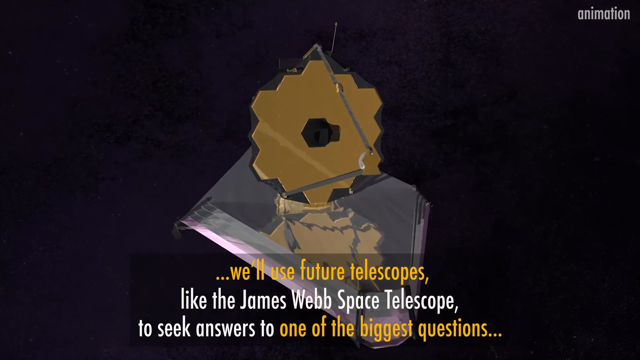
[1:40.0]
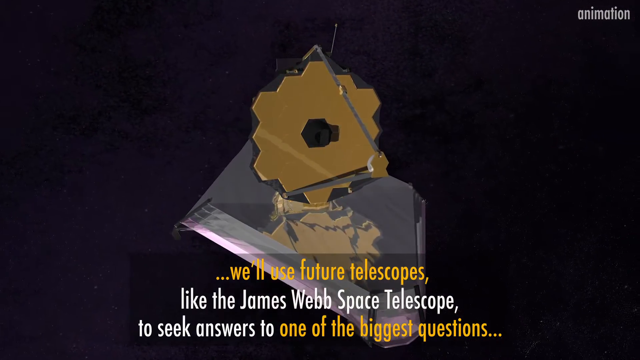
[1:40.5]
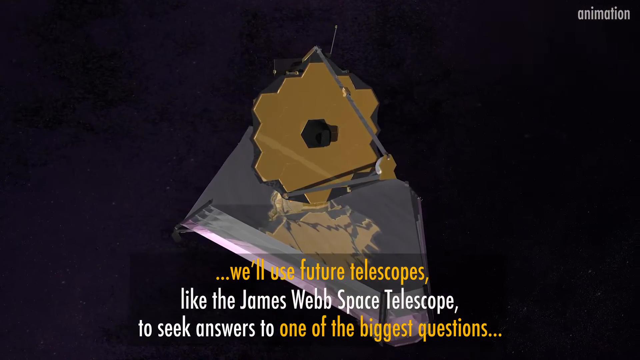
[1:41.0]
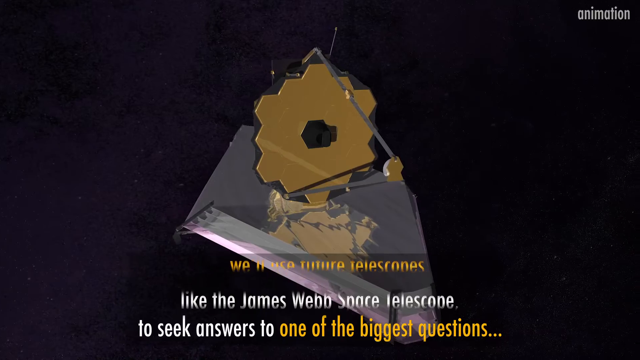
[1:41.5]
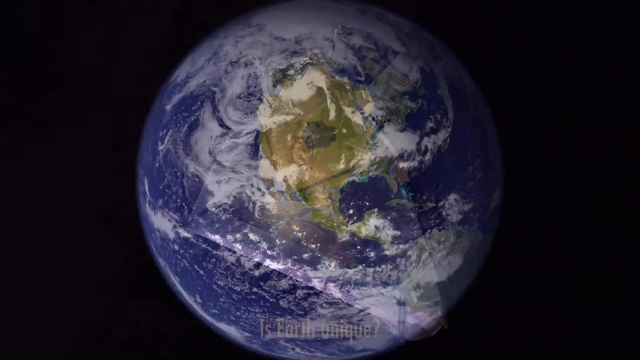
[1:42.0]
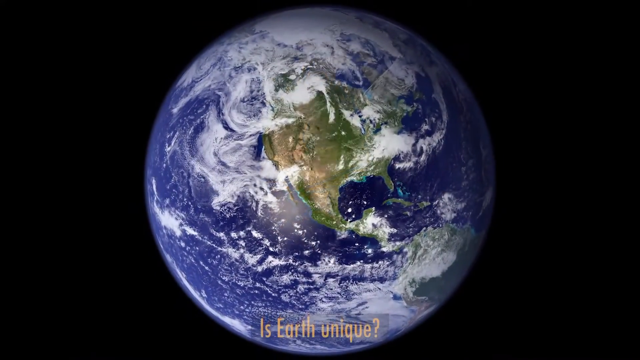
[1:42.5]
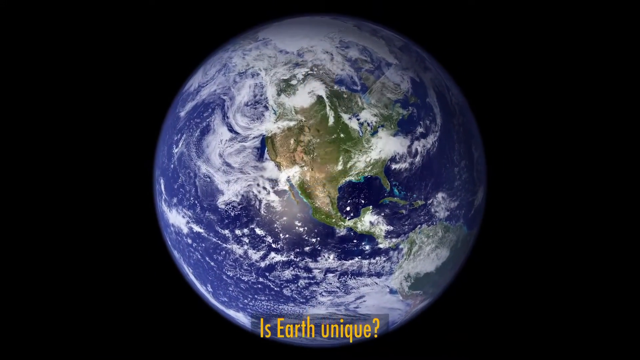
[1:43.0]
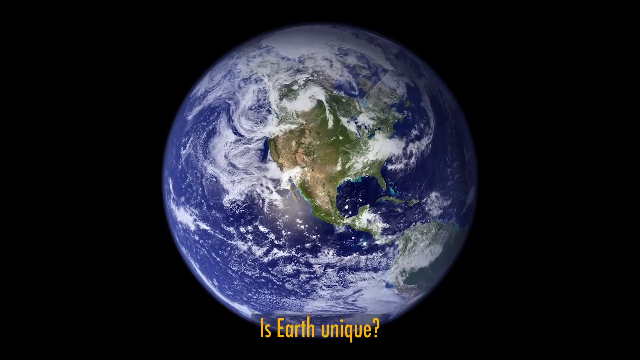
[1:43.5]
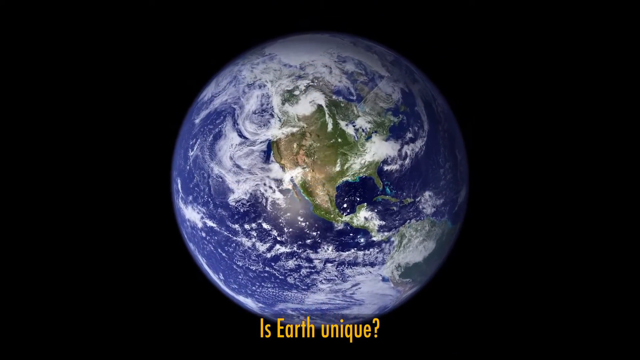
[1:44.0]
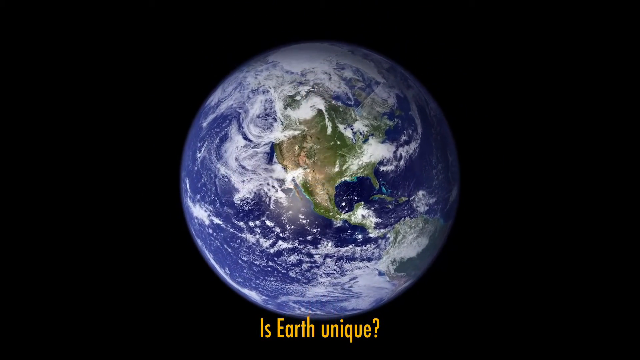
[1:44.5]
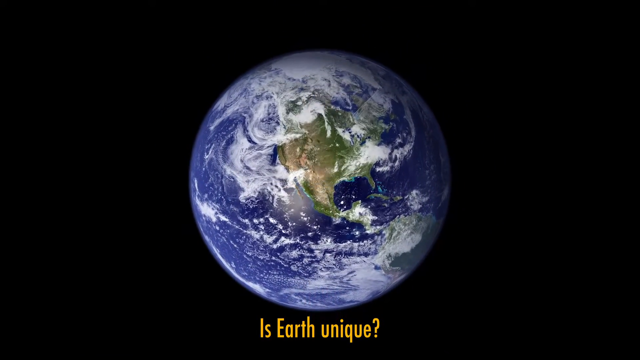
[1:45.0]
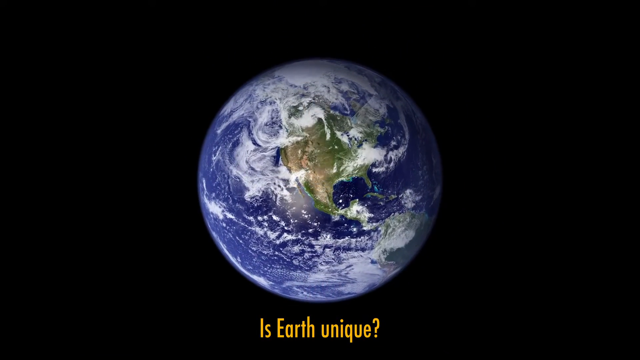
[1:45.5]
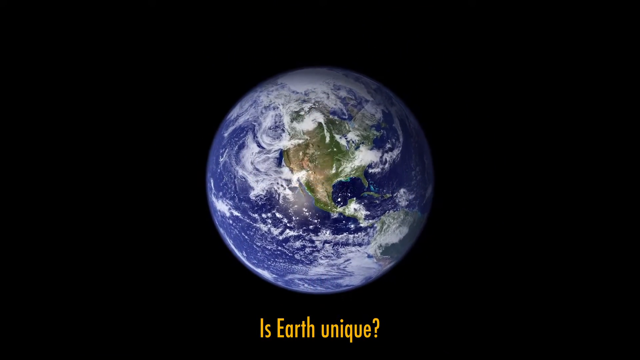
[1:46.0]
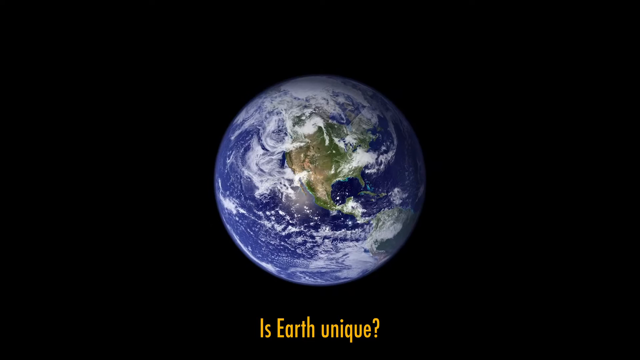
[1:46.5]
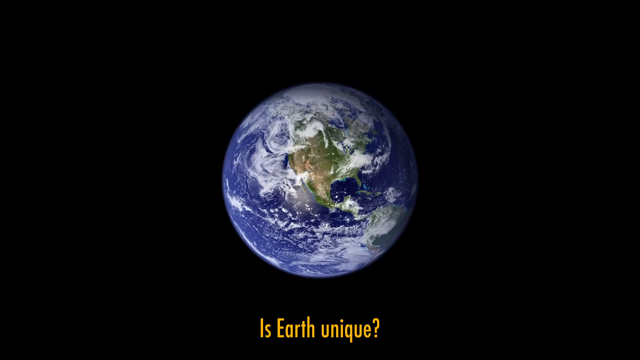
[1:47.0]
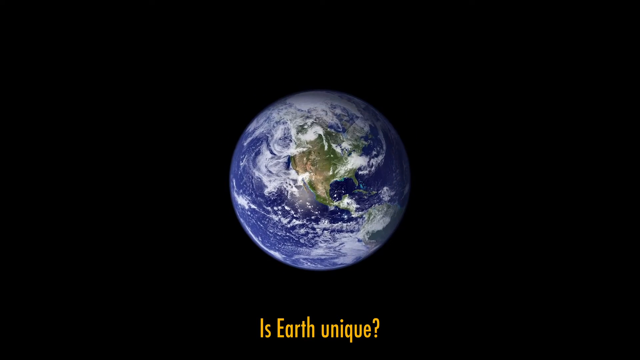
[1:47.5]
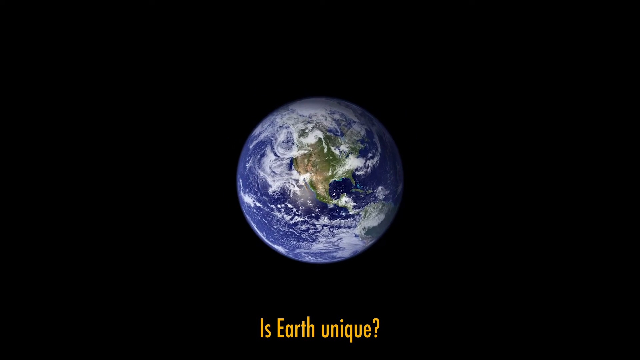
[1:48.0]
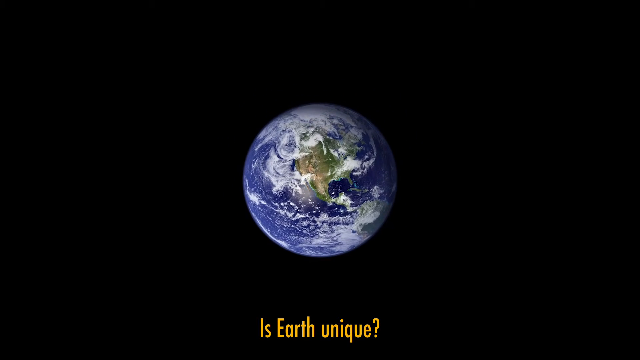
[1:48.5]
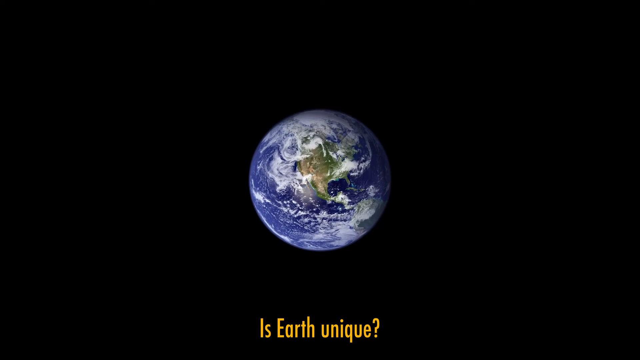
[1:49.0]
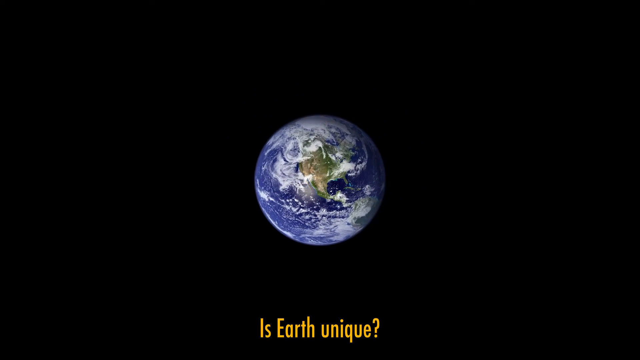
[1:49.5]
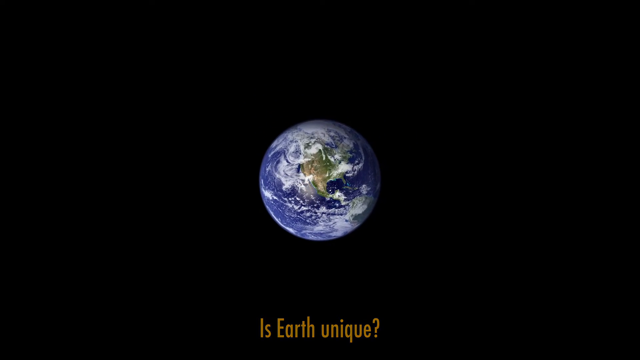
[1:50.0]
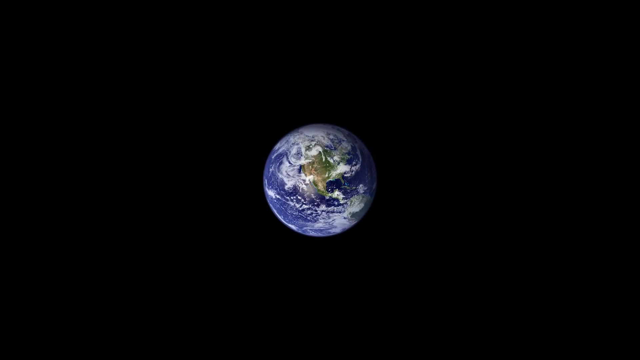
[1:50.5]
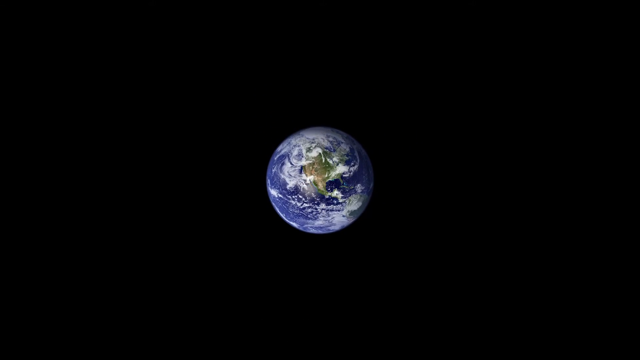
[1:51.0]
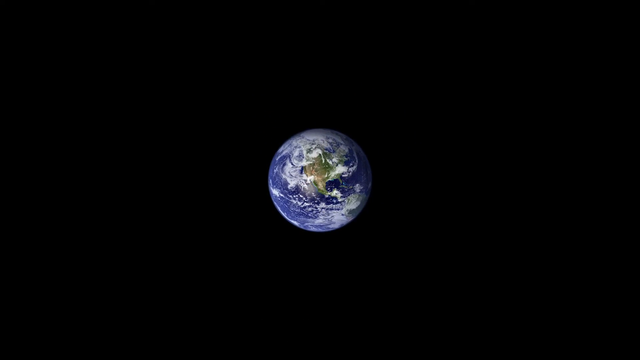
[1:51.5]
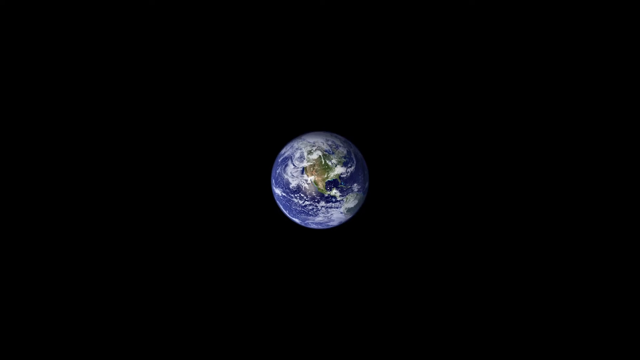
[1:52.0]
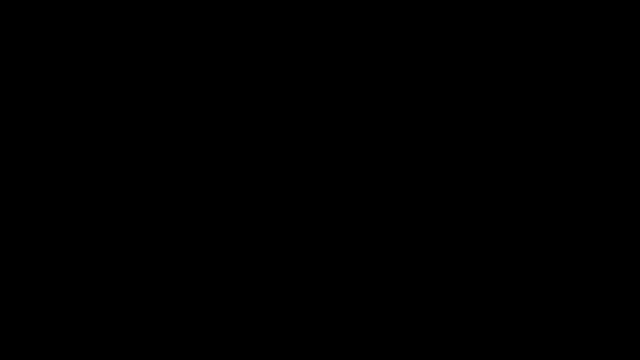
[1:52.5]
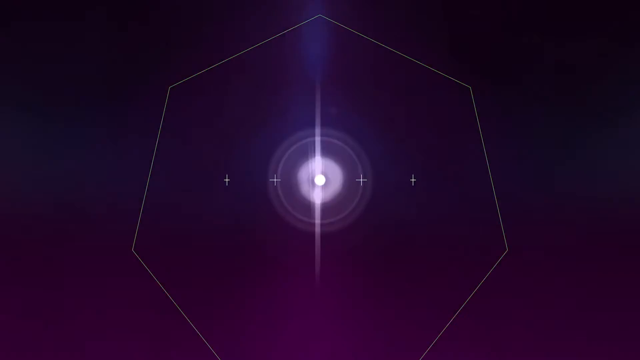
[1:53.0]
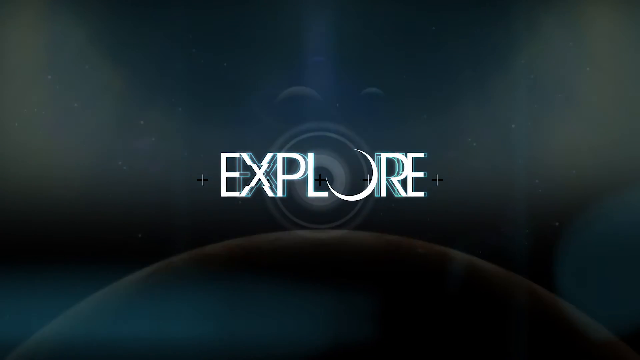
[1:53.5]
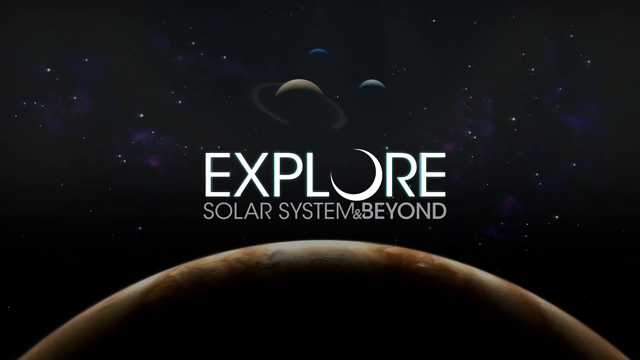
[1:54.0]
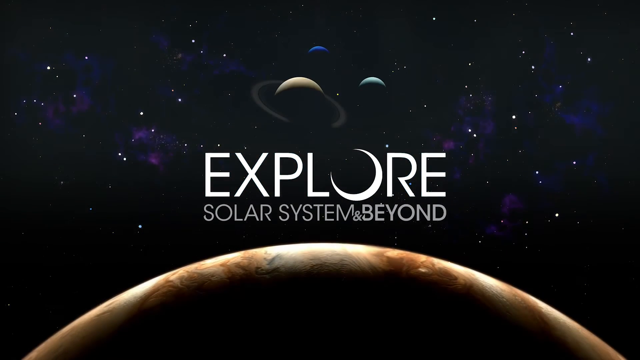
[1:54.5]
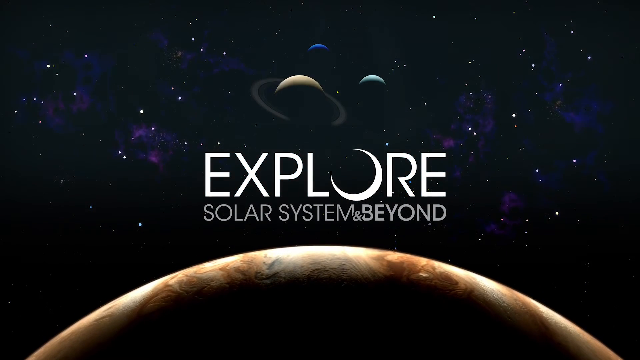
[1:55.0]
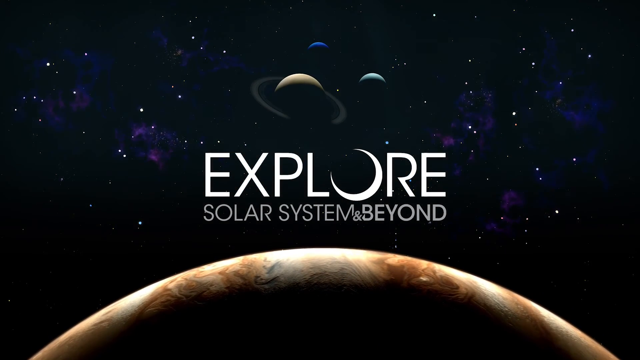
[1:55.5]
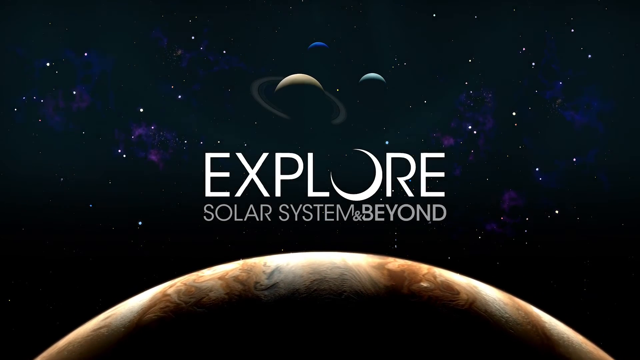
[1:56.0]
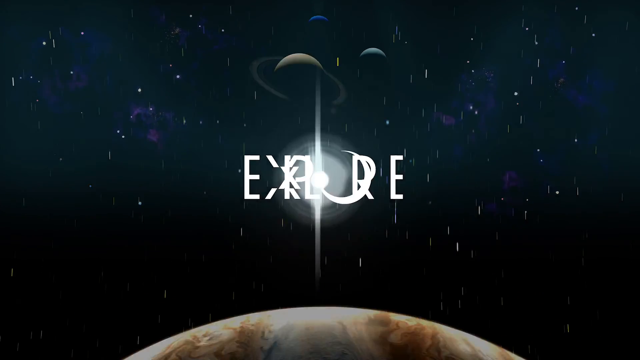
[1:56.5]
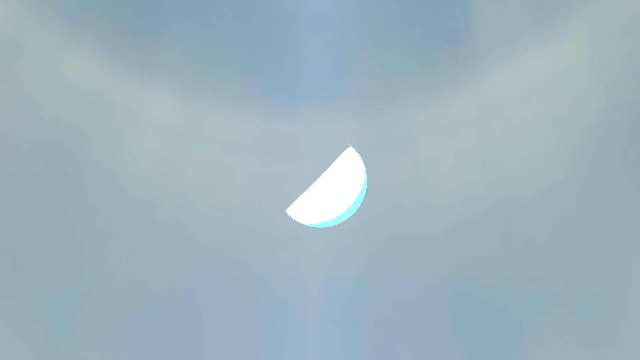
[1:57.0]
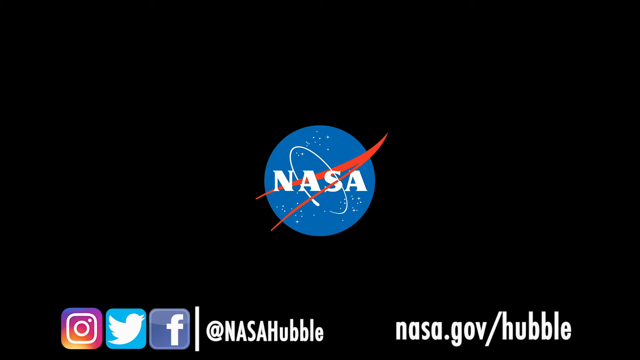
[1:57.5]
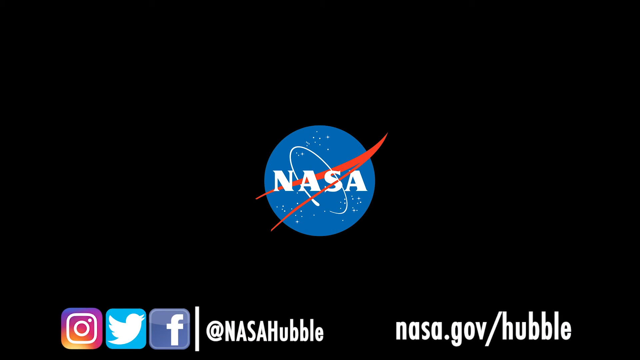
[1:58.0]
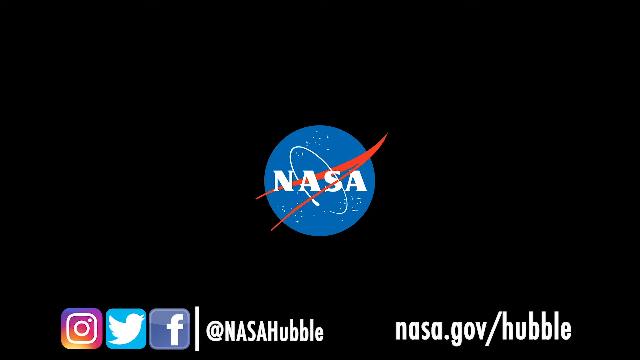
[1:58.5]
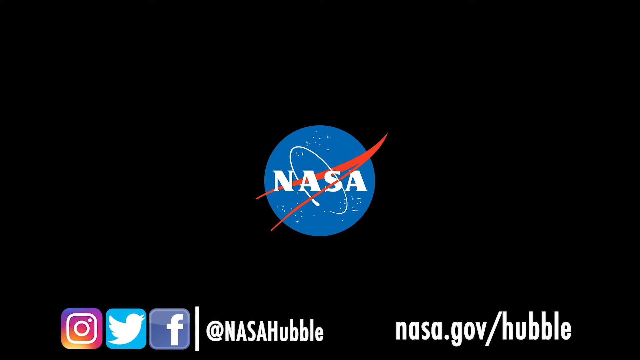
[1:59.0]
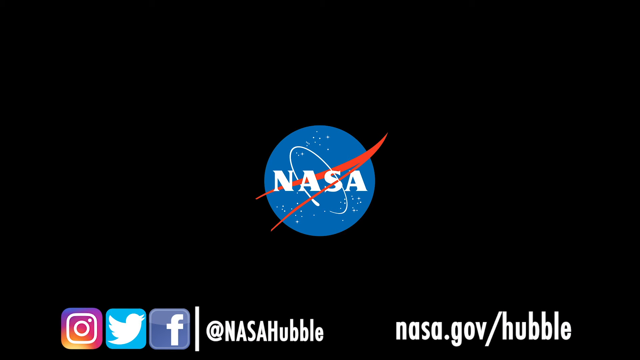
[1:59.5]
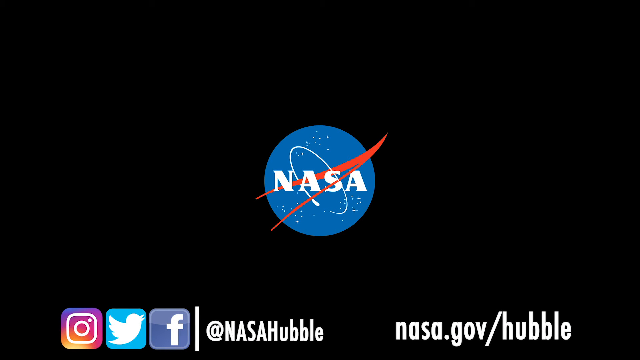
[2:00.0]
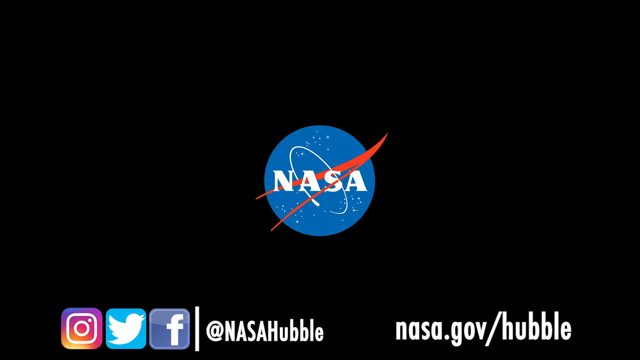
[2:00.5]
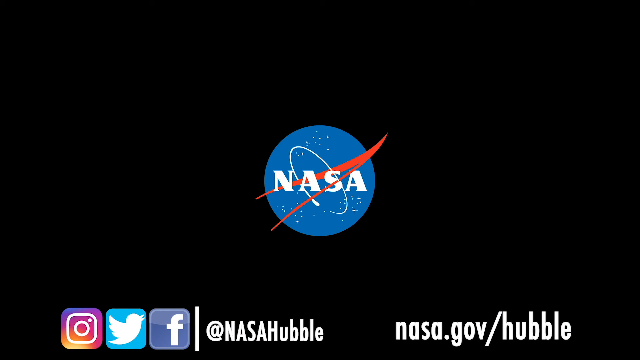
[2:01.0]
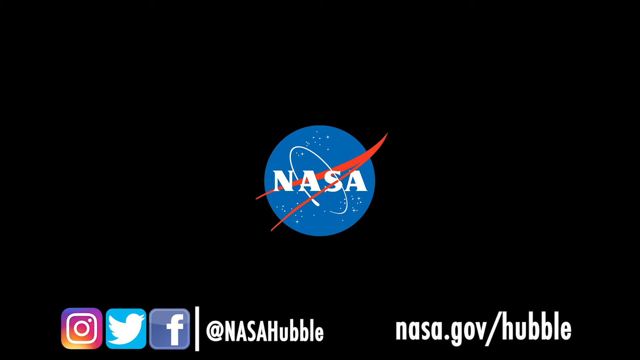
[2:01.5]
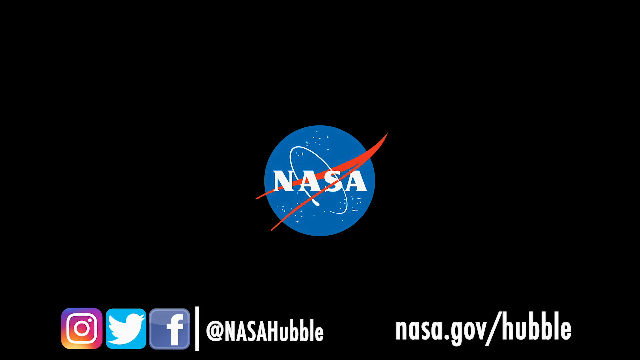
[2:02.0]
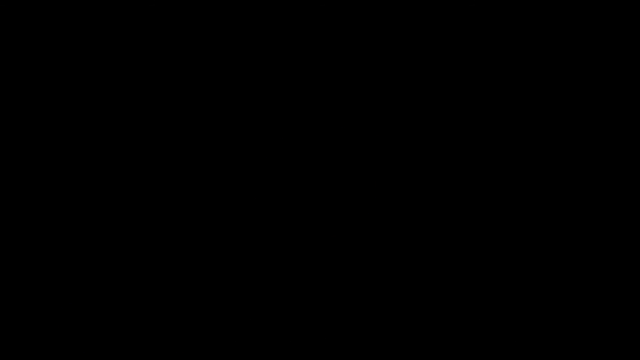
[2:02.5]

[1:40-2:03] The James Webb Space Telescope spins counterclockwise through a black background. Then Earth appears against a black background, showing North America and the oceans with white clouds over top, along with Central America and part of South America. Yellow text underneath reads "is Earth unique?" The camera zooms out so the Earth gets smaller and smaller; about midway, it suddenly zooms into the distance and the screen changes. On a black background there is a flash and a white outline of something like a hexagon that flashes very quickly. A new black screen shows the word "explore" in outlined text, and then white text says "explore" with the o shaped like a moon. Underneath it says "solar system and beyond". At the bottom is the top curve of a gray and brown planet, and behind it is a black and blue sky with a lot of stars, a planet with rings around it, another planet behind that and slightly to the right, and a planet behind the second, slightly to the left, that looks blue. That flashes, and then a blue circle appears with an oval on it and a red kind of v-shape, and in the middle it says "NASA".